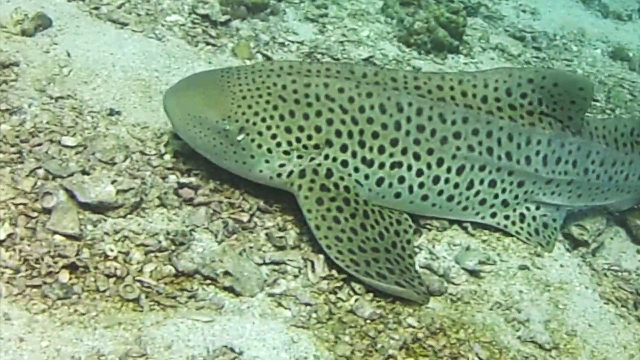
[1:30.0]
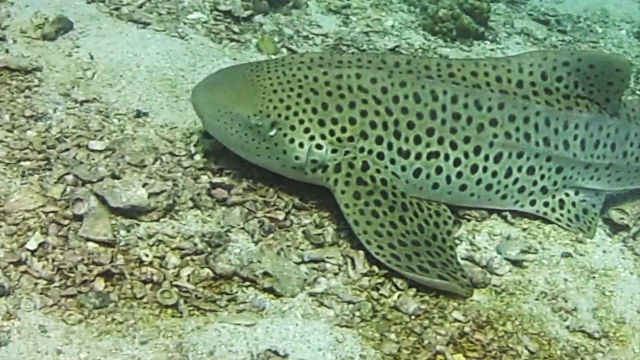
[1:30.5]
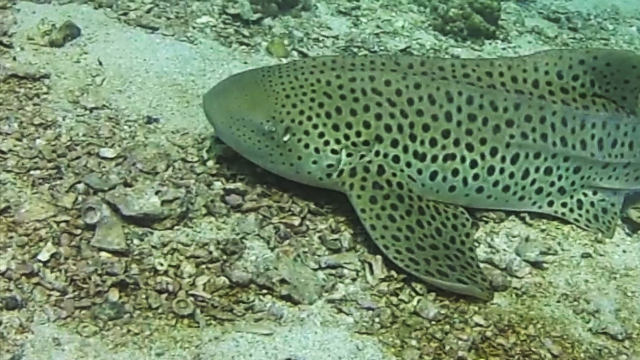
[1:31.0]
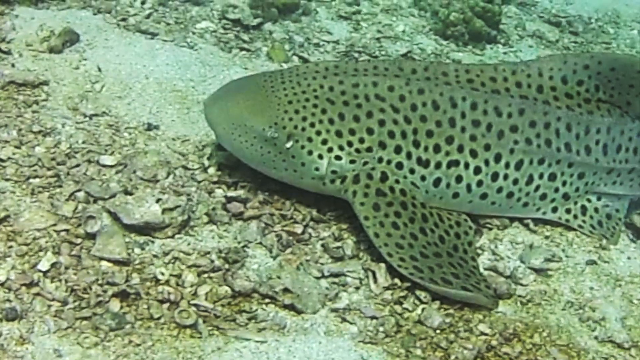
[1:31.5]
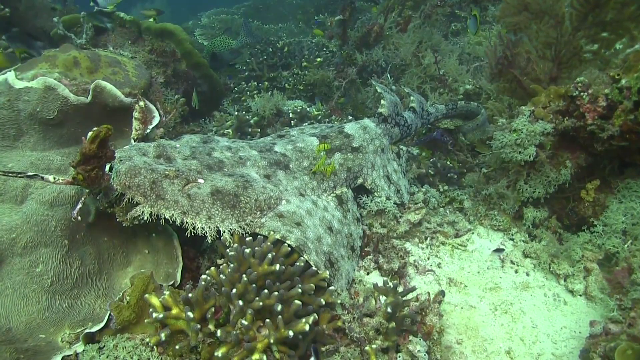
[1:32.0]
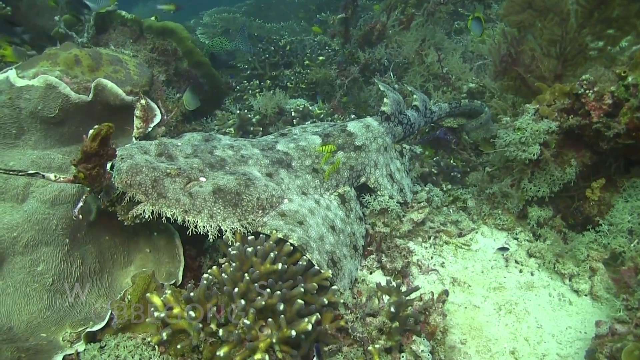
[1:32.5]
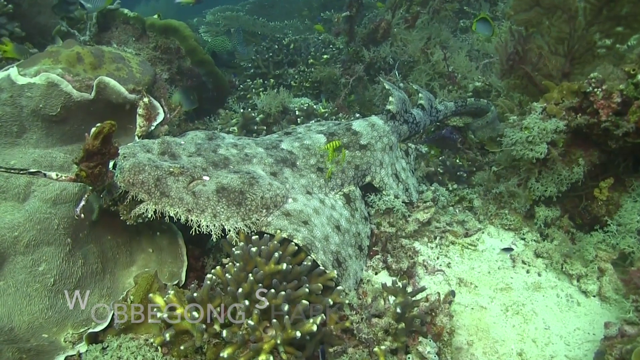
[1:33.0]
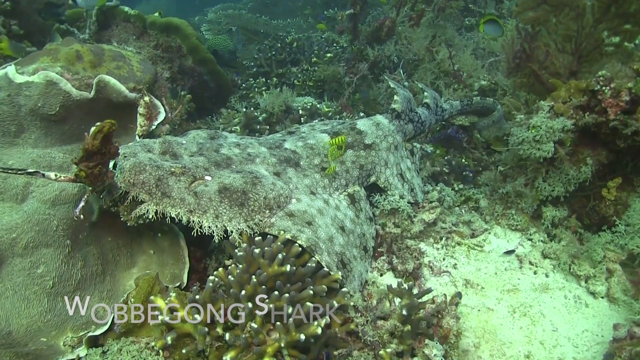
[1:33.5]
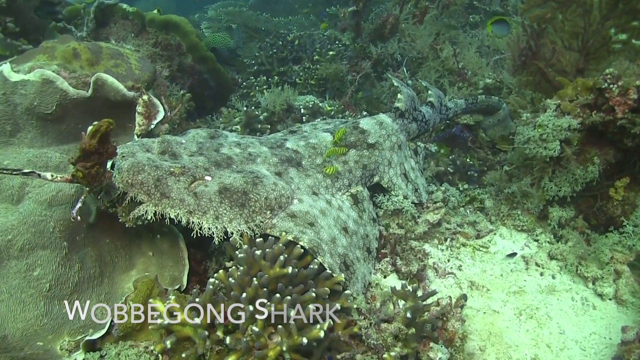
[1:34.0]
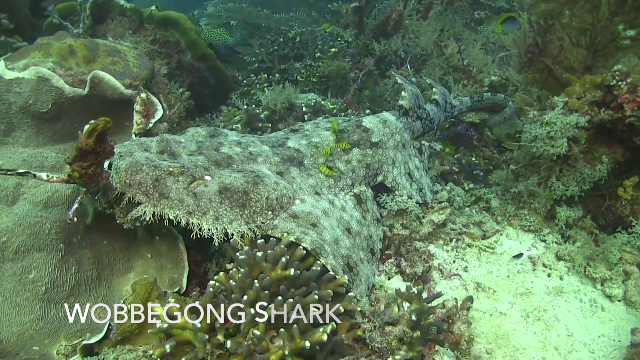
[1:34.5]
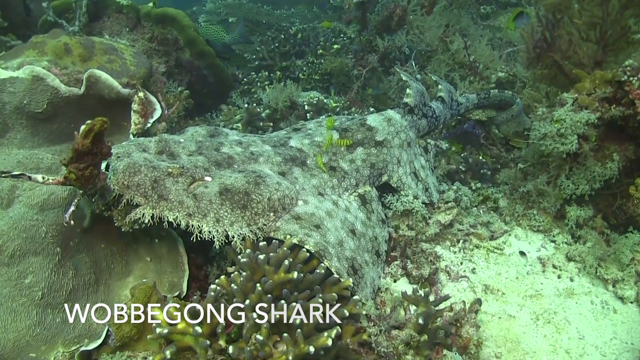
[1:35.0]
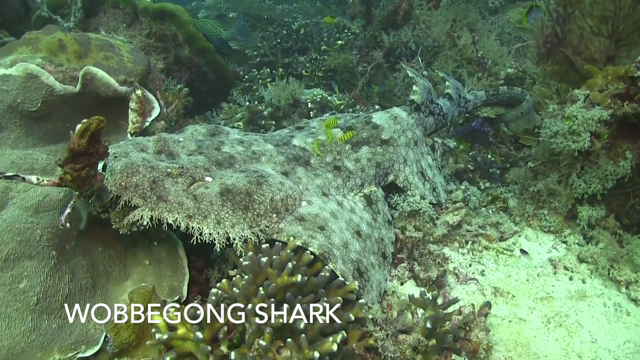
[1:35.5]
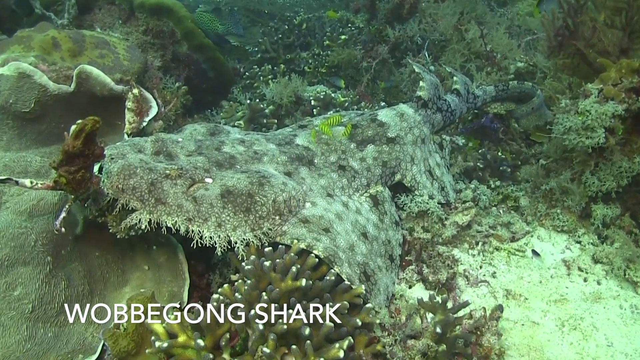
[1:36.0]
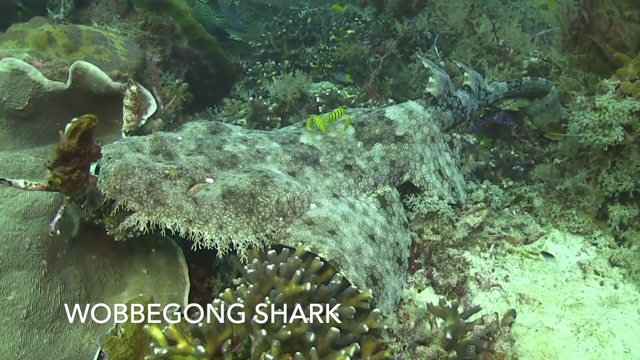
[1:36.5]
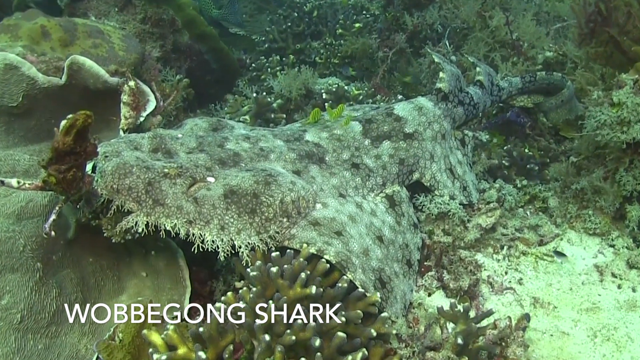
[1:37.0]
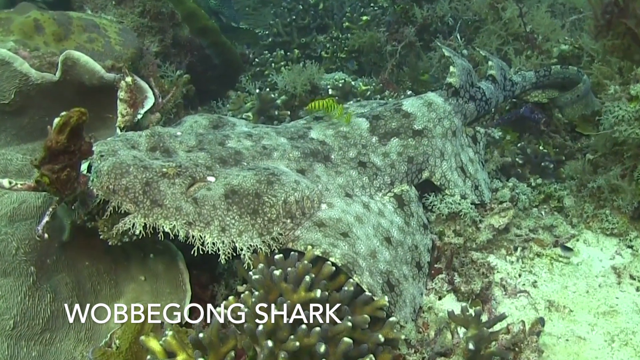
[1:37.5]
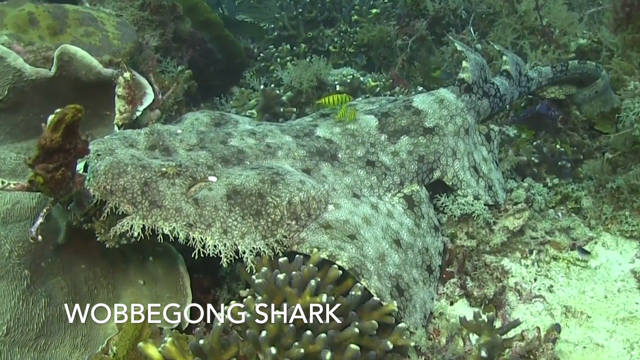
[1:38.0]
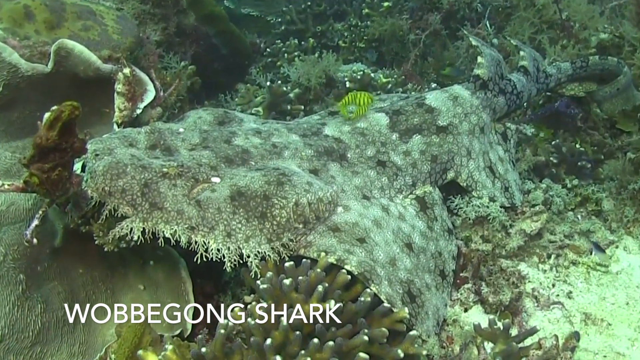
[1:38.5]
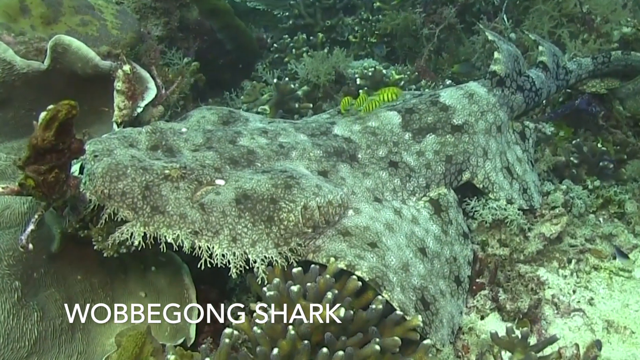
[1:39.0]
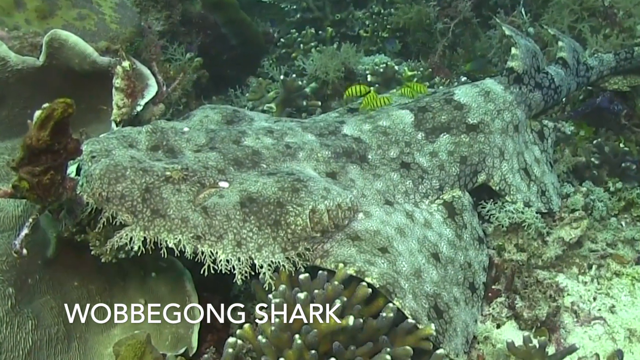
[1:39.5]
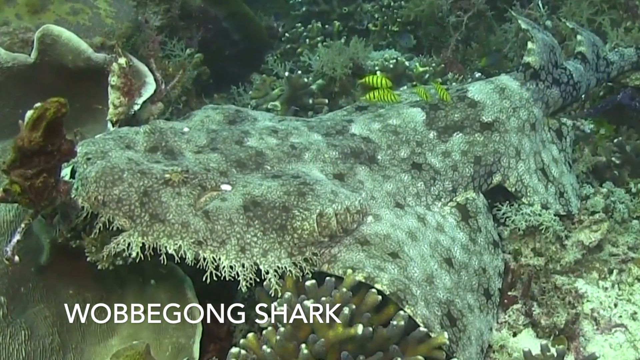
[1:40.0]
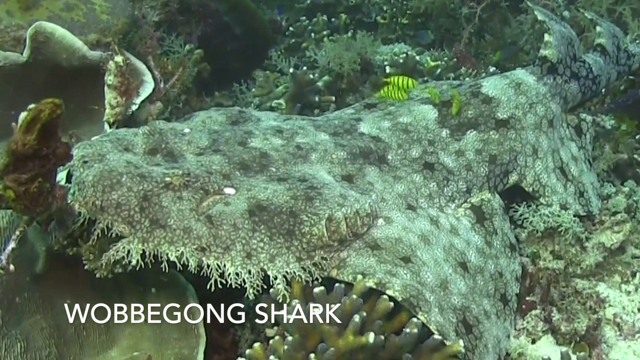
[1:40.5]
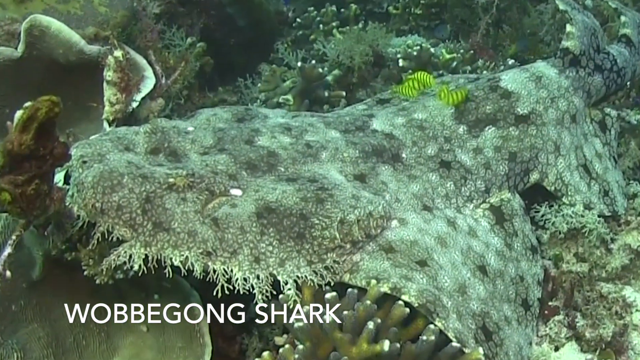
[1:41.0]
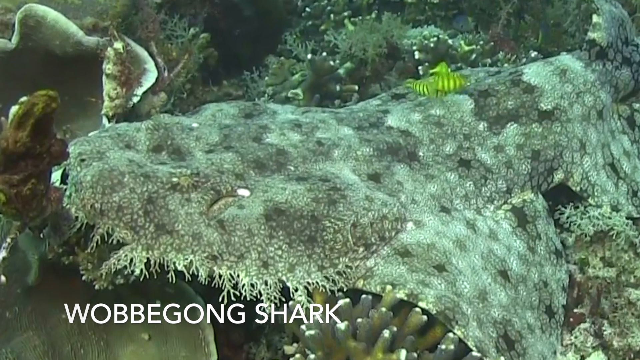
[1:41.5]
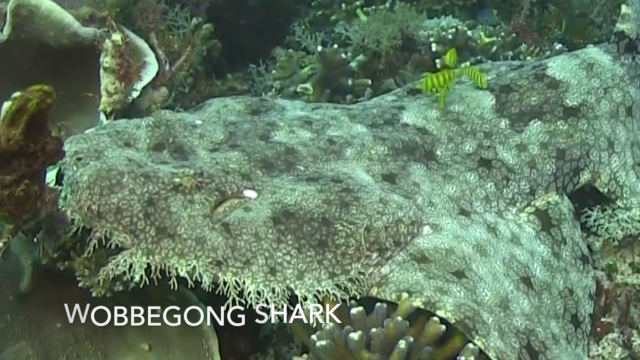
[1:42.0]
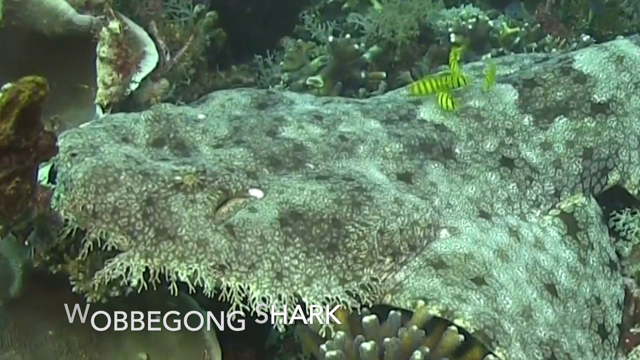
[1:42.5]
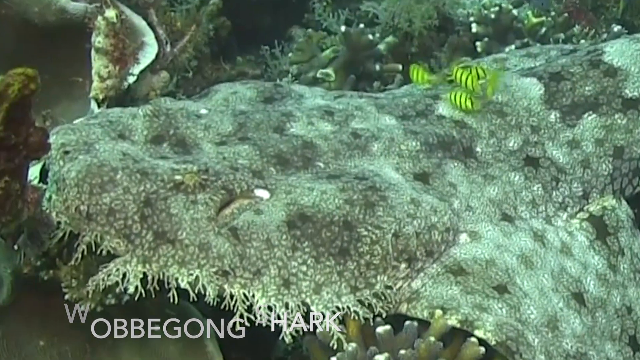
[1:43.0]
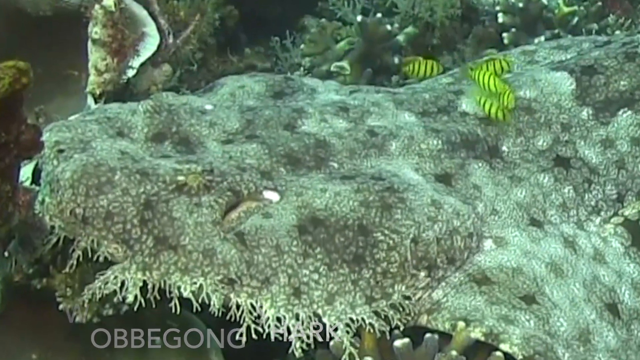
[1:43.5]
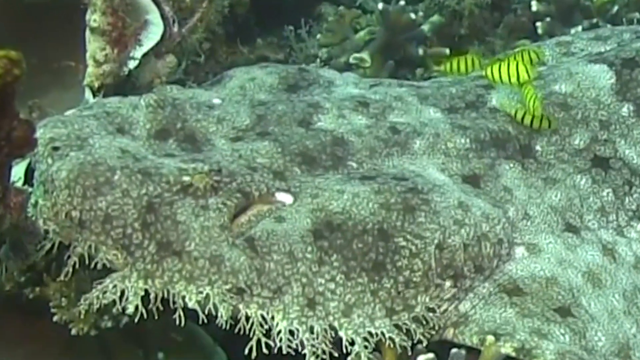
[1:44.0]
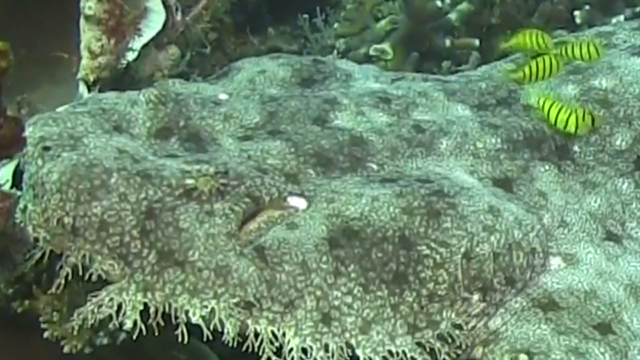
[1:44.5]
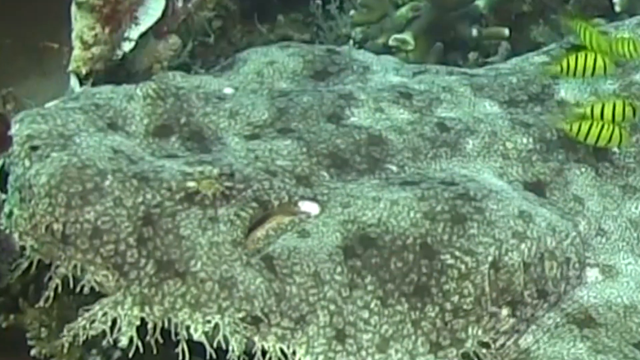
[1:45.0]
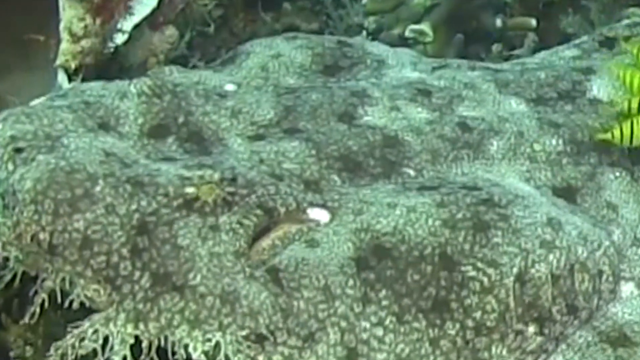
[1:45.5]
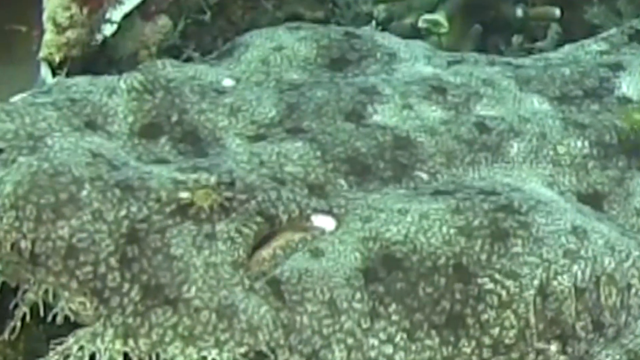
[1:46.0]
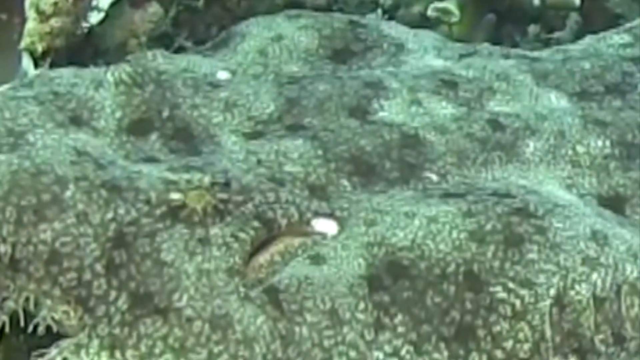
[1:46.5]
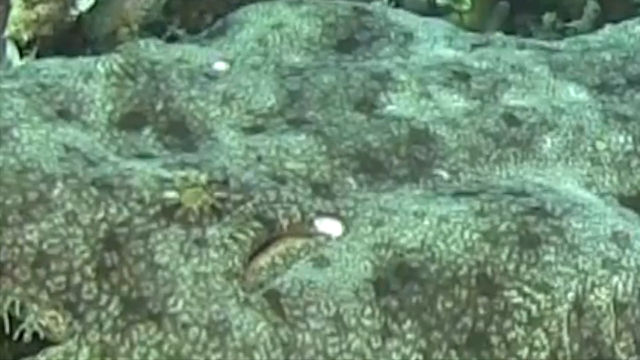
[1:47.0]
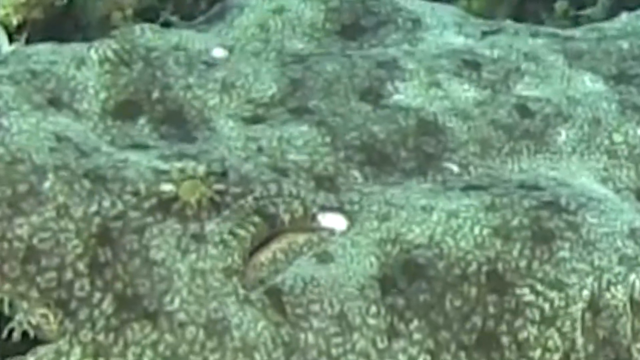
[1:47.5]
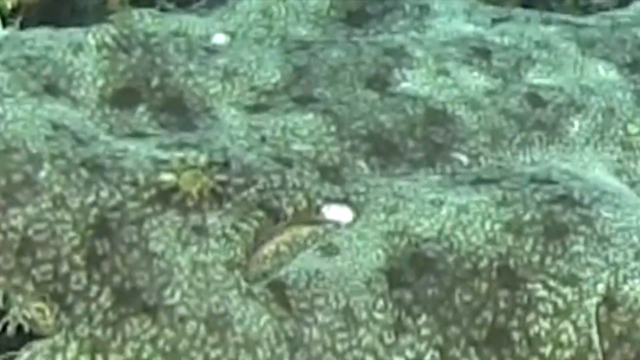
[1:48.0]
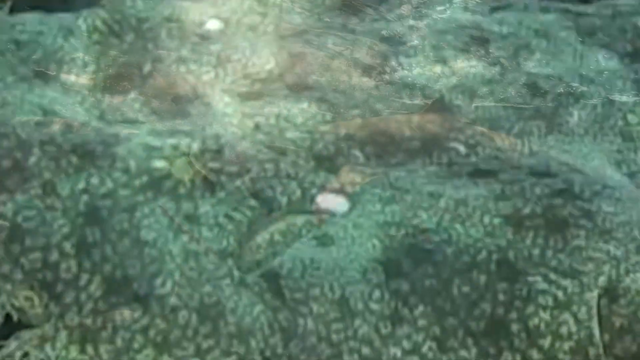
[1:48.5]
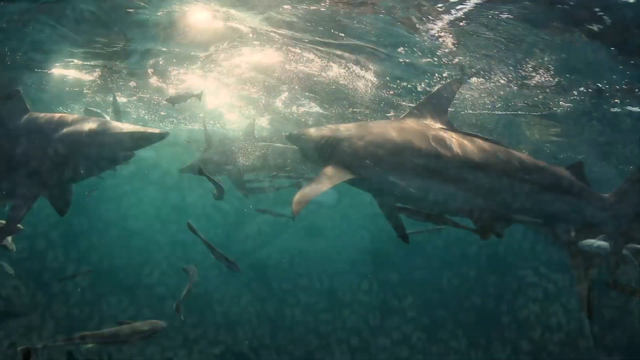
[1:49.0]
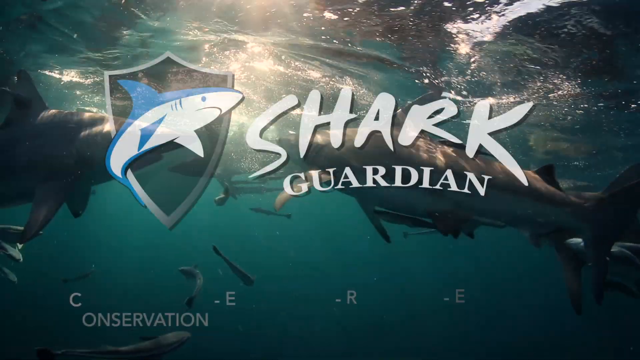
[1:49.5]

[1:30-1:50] The camera moves around the sea, showing sharks. A flat shark is on the ground, hard to recognise as a shark at a glance, and it seems to have some sort of hair on its skin. No eyes or mouth are visible; it is just lying there on the ground. It is grey with tiny white dots close to each other, and its tail faces up.